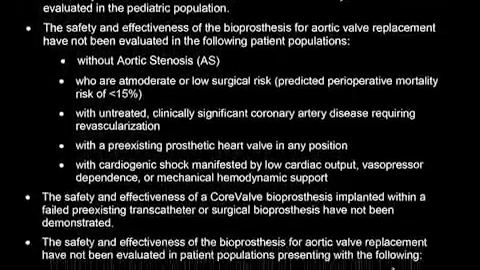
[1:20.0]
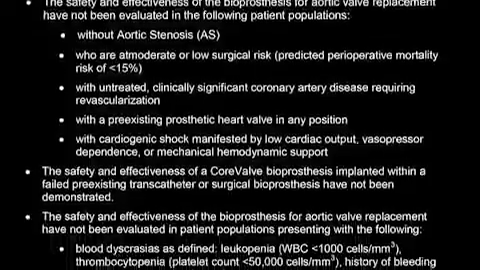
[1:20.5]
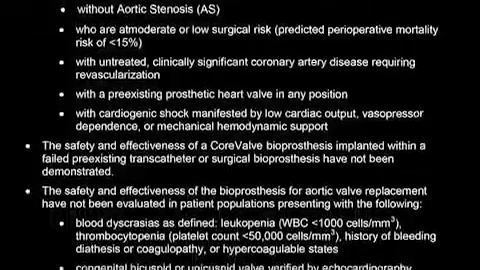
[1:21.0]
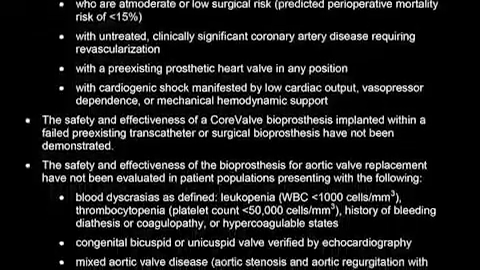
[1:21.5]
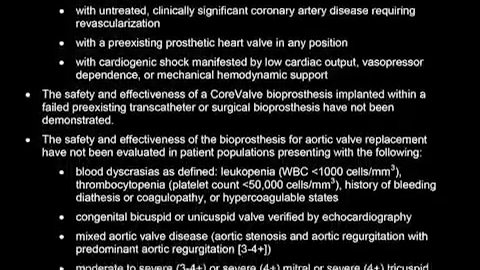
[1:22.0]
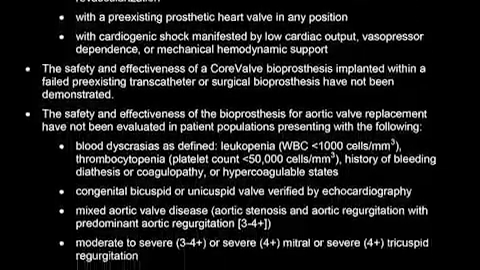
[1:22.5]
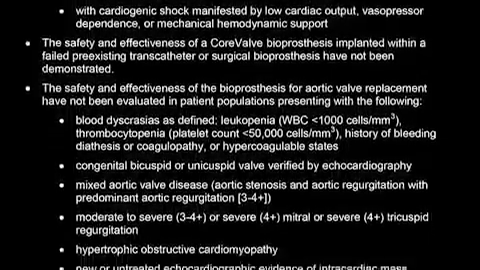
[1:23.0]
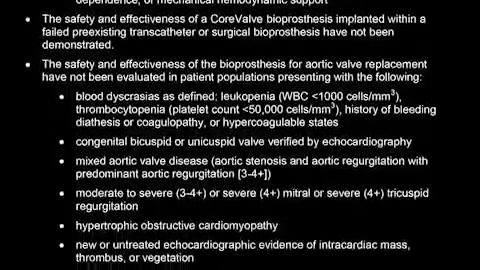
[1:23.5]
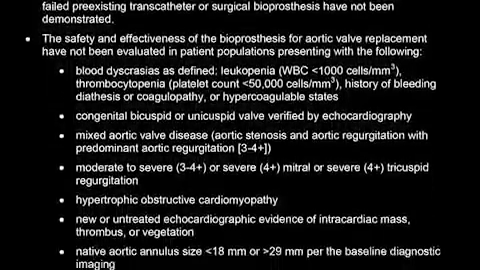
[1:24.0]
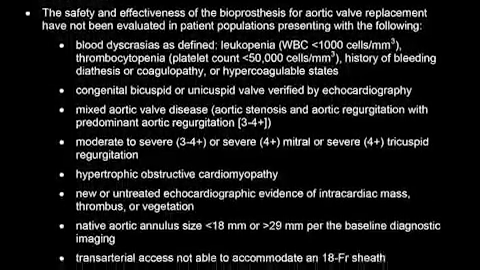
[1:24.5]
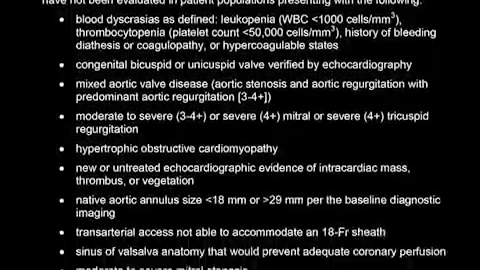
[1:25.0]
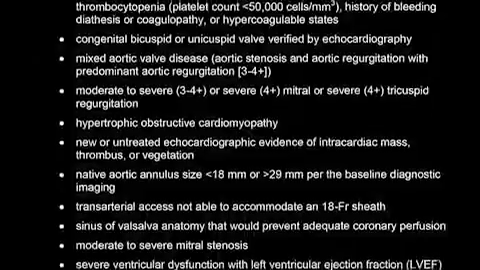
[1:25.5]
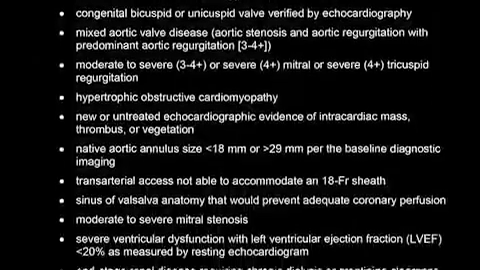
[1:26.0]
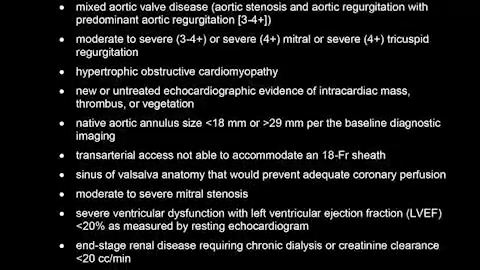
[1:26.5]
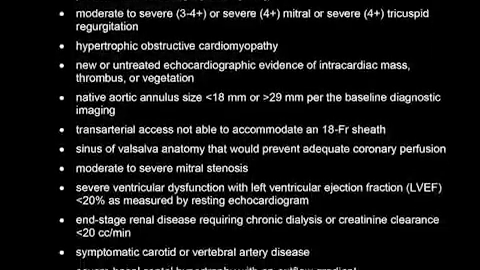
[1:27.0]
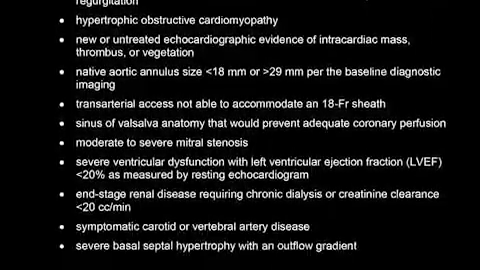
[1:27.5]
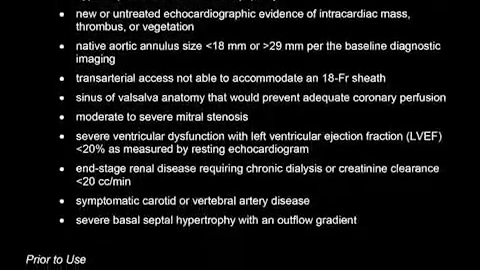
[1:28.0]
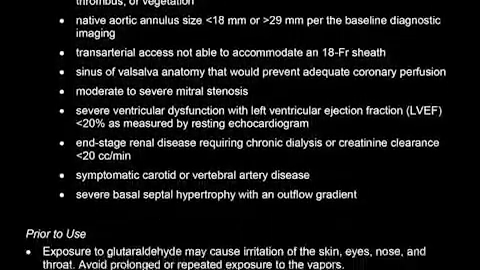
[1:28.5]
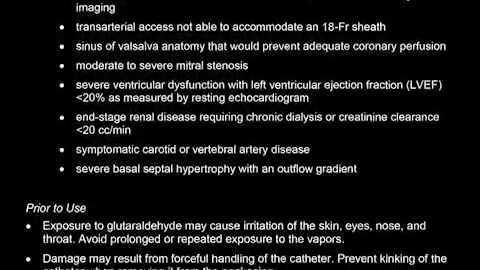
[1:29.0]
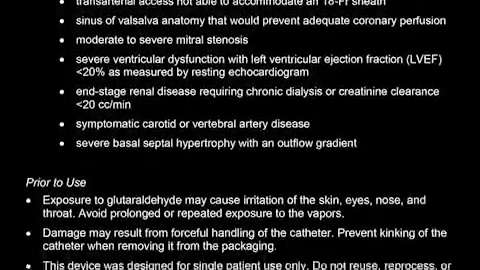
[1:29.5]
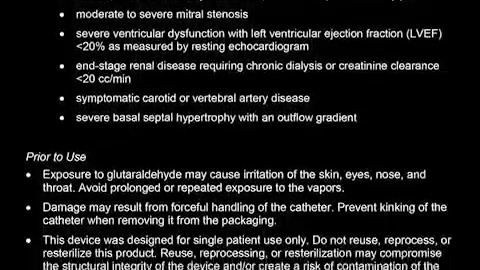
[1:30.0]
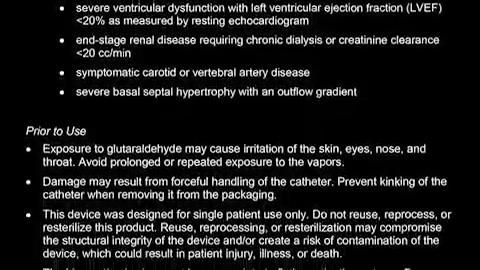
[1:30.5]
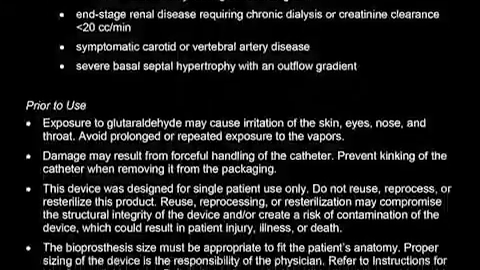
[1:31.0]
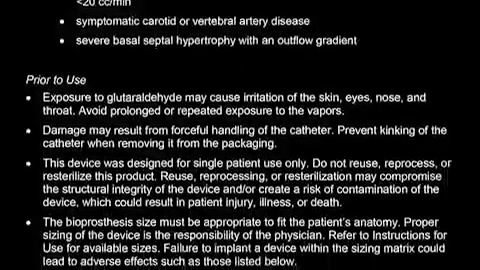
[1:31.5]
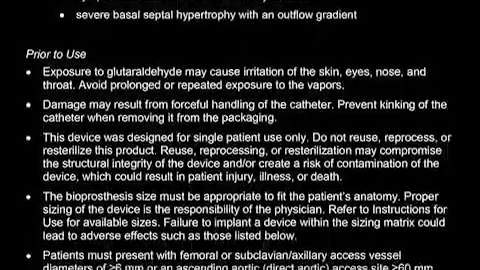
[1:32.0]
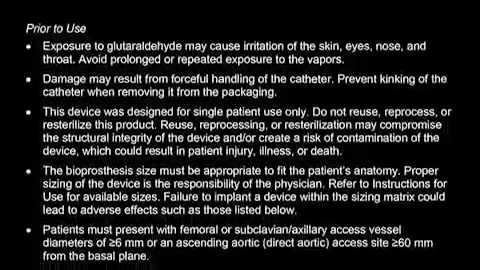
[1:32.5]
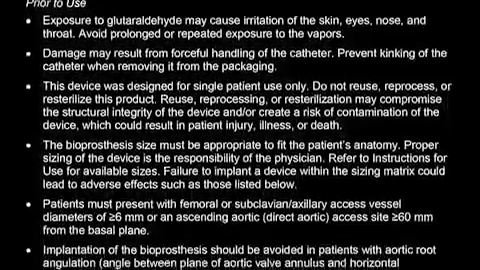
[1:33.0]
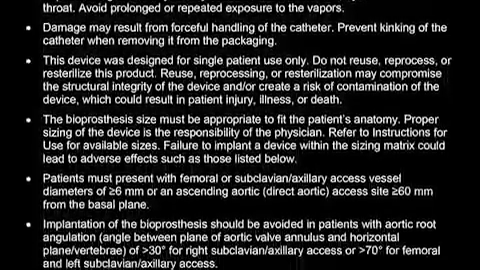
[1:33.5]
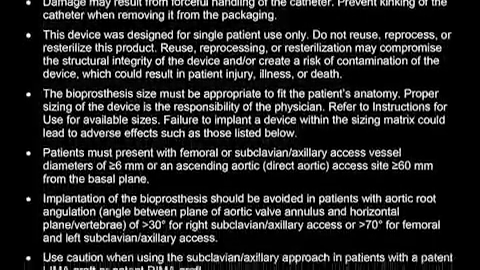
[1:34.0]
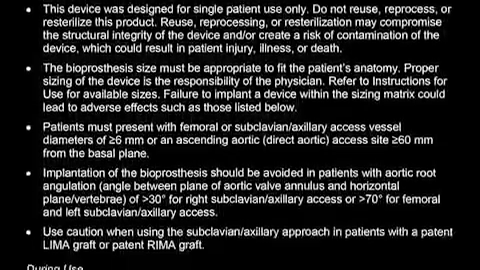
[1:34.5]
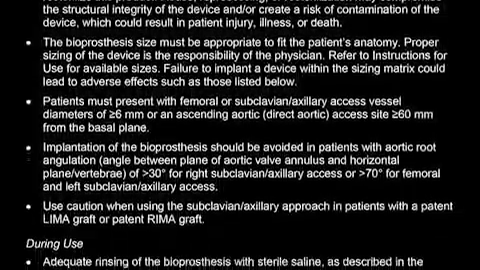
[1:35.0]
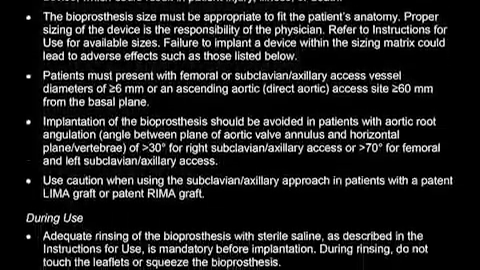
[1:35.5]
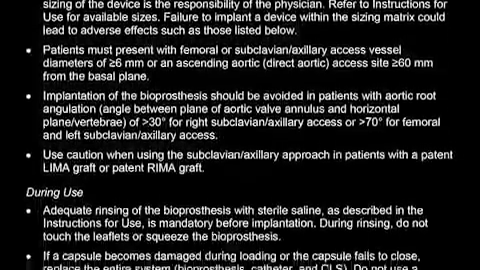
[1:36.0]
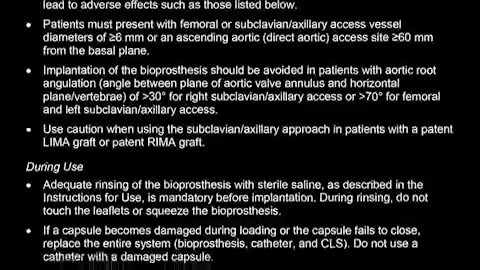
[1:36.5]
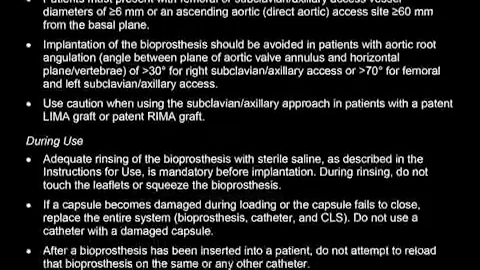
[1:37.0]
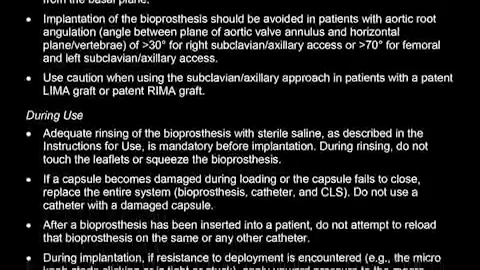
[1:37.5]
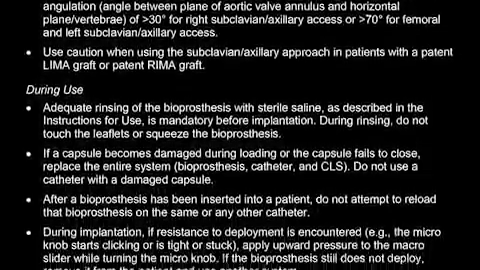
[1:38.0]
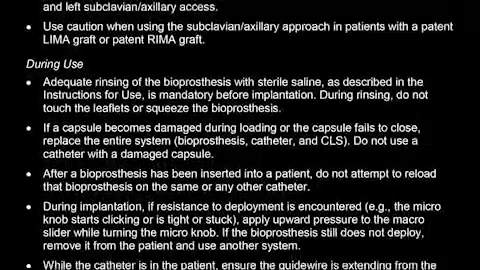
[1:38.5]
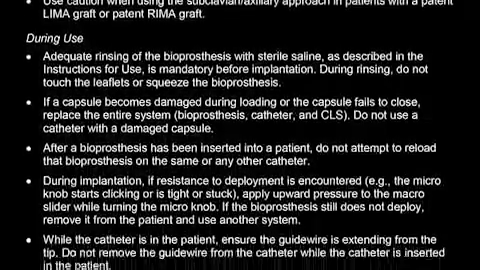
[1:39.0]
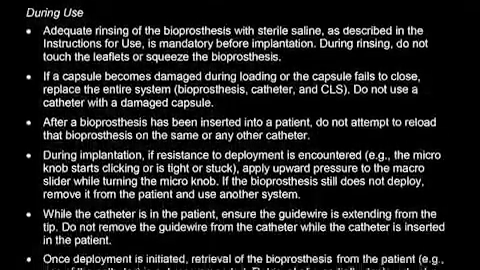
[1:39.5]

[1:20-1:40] Text about the safety and effectiveness of the procedure moves by kind of fast, with bullet points all down the side carrying a lot of information, each with its own couple of sentences. There is a section on prior to use and a whole section on during use. The text begins: "the safety and effectiveness of the bioprothesis for aortic valve replacement have not been evaluated in the following patient populations." It continues: "without aortic stenosis, AS, who are at moderate or low surgical risk". More bullet points follow, including one reading "the safety and effectiveness of core valve bioprothesis implanted within a failed preexisting transcatheter or surgical".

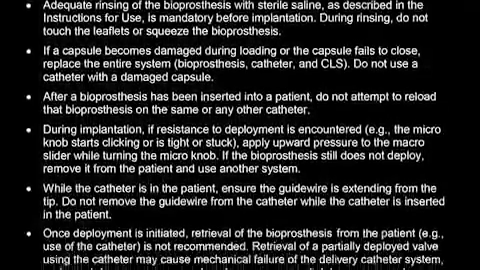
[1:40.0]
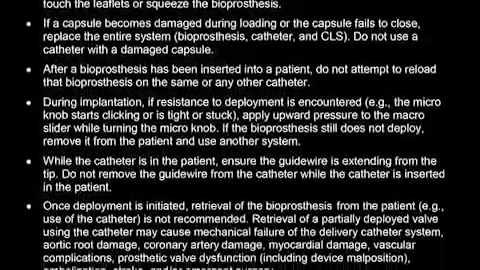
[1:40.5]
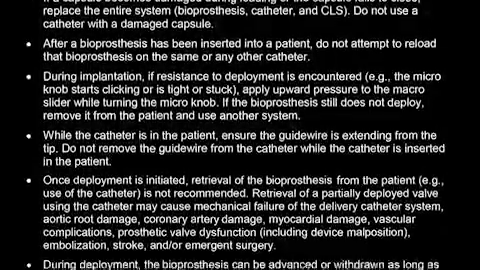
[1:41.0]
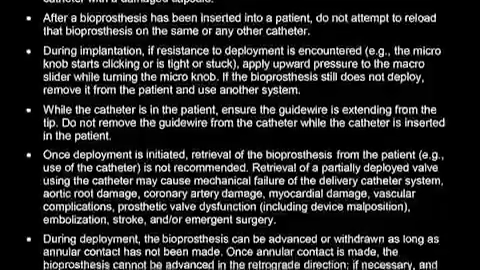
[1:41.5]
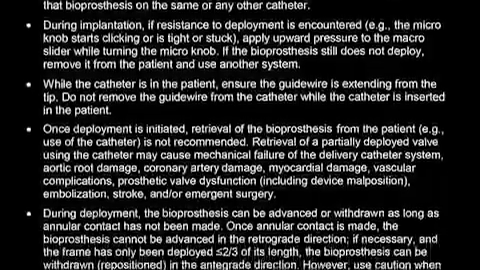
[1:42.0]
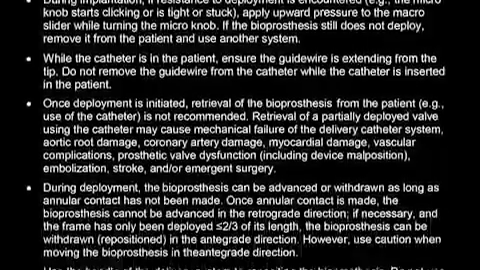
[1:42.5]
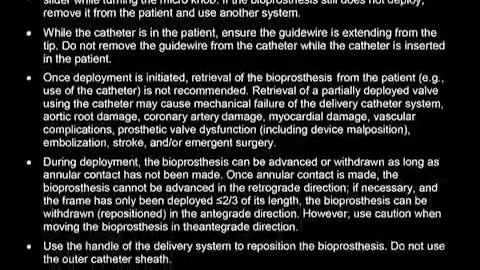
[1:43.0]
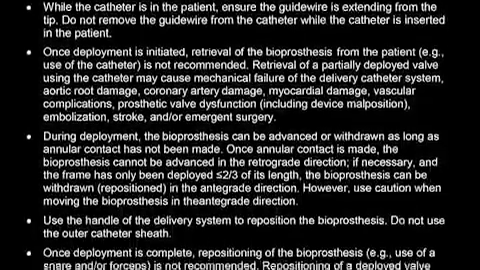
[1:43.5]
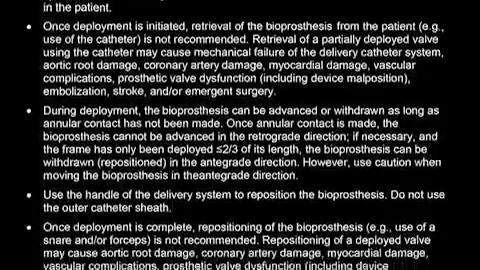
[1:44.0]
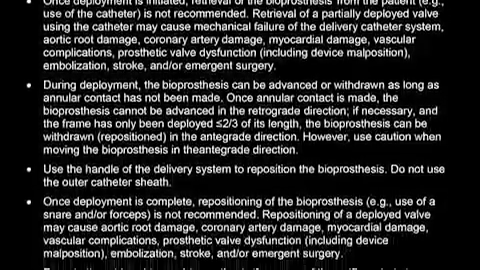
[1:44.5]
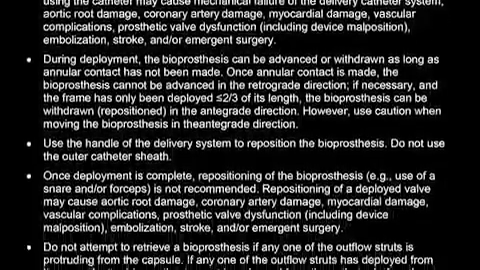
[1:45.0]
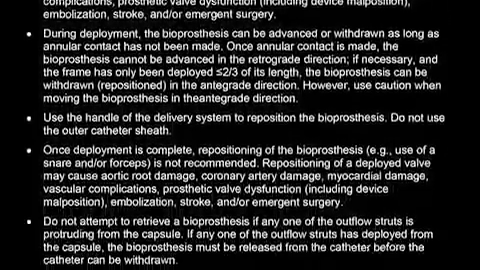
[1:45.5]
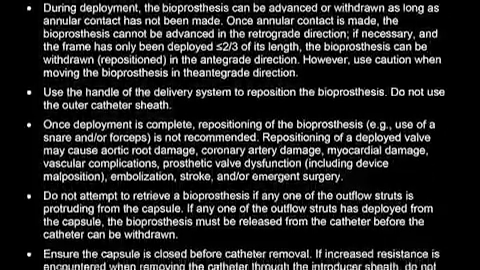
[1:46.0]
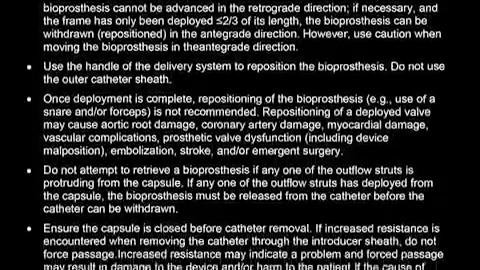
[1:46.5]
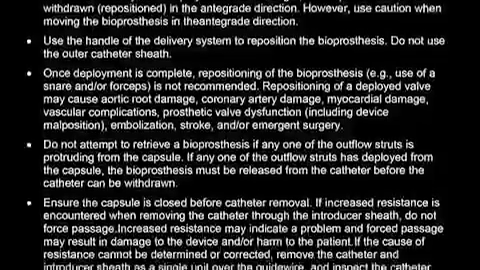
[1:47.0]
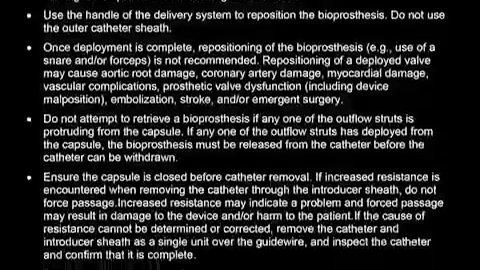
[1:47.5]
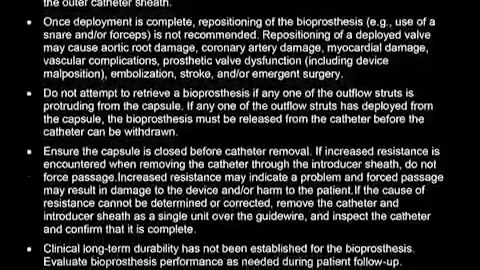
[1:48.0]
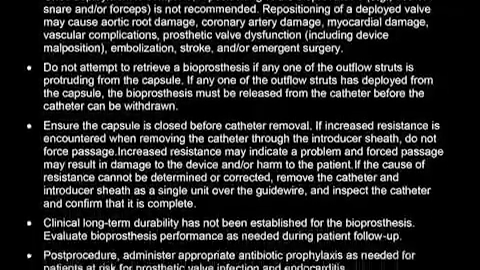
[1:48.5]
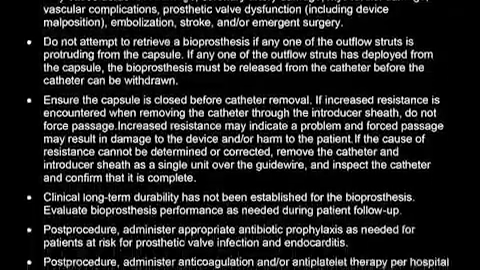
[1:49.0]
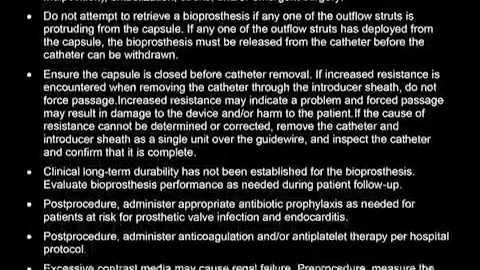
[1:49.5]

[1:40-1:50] Words move up and down, mainly going up, in bullet points about the core valve procedure for the heart; some are paragraphs and others are just one or two sentences. One reads: "do not attempt to retrieve a bioprothesis in any one of the outflow struts is protruding from the capsule if any one of the outflow struts has deployed from the capsule the bioprothesis must be released from the catheter before the catheter can be withdrawn."